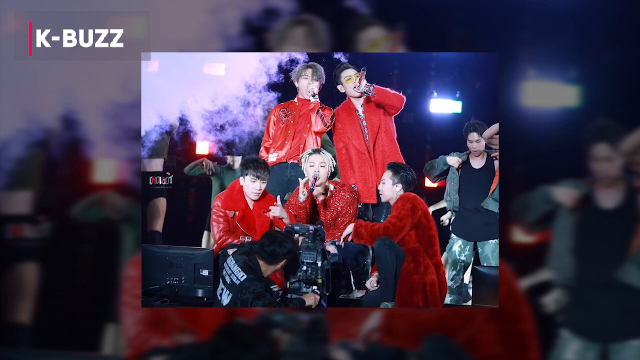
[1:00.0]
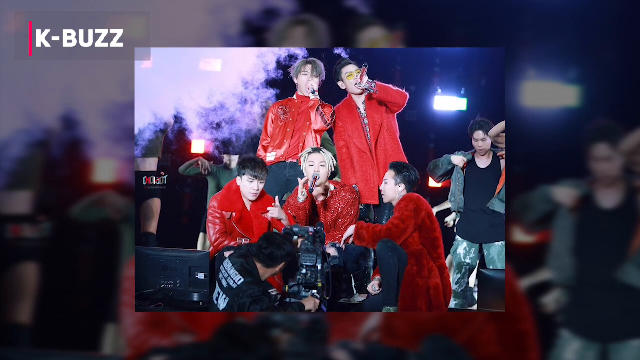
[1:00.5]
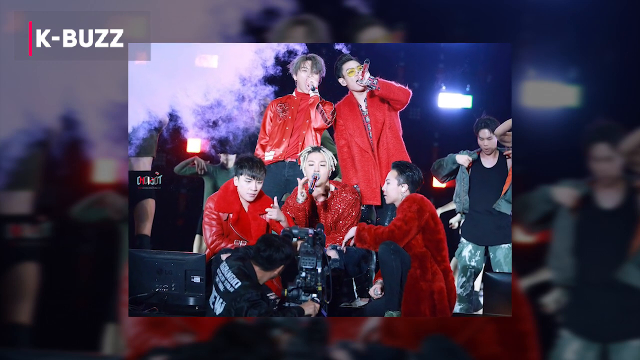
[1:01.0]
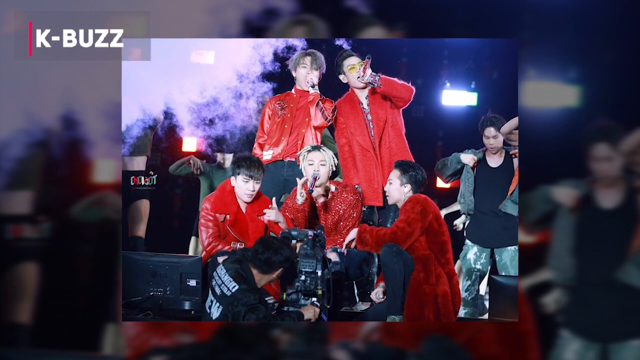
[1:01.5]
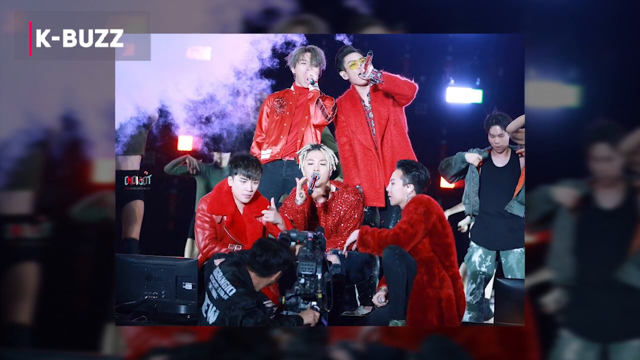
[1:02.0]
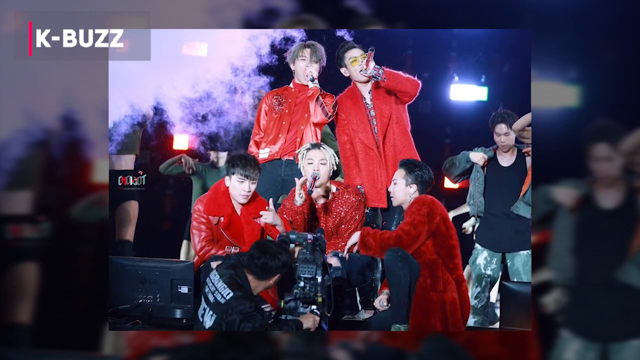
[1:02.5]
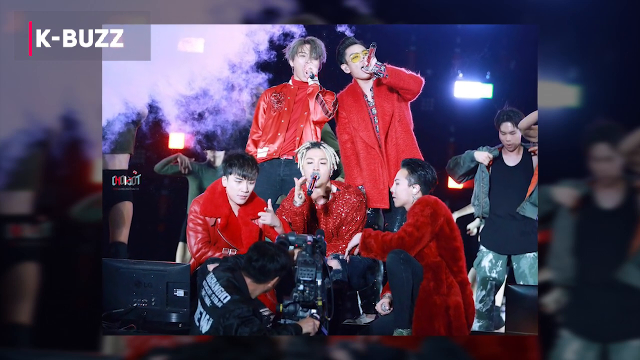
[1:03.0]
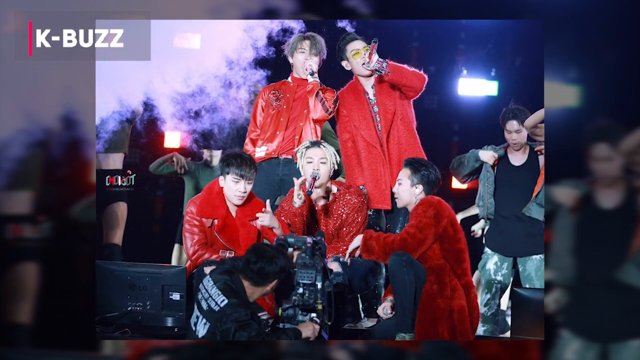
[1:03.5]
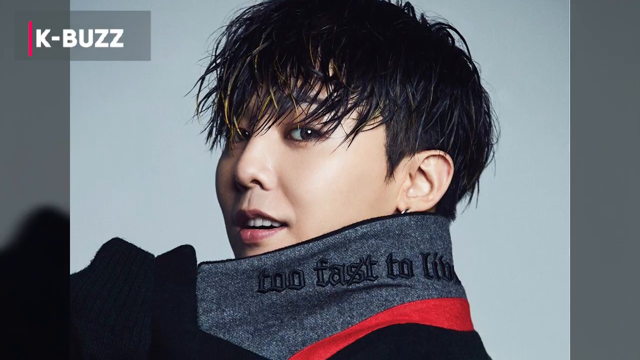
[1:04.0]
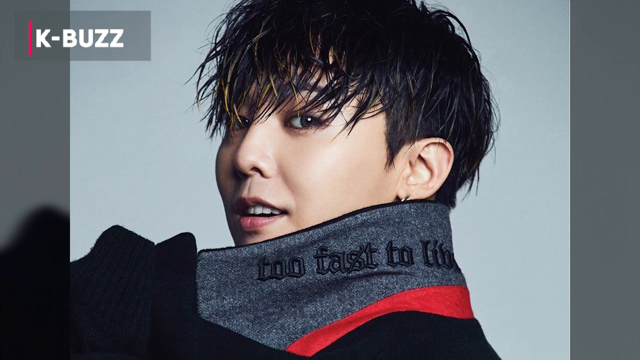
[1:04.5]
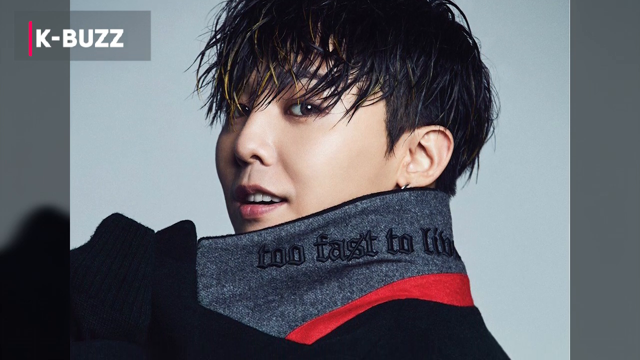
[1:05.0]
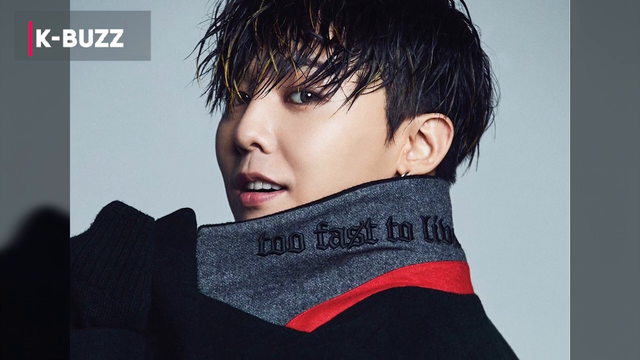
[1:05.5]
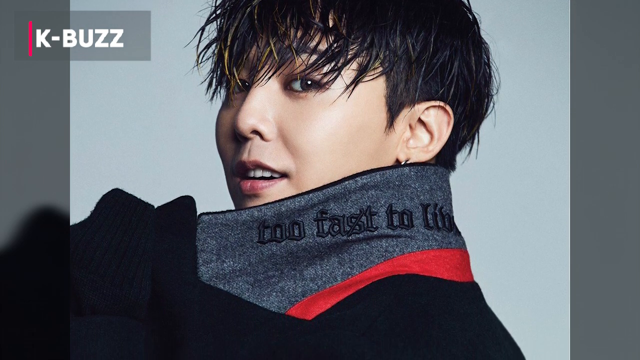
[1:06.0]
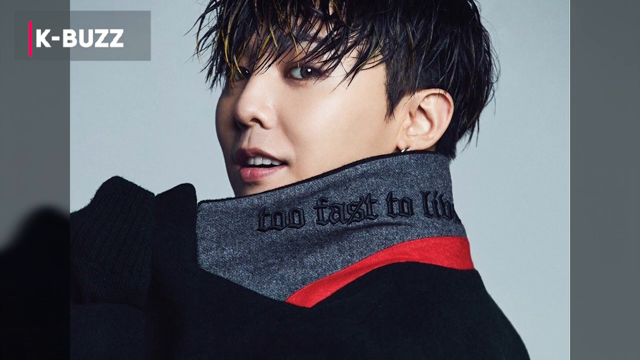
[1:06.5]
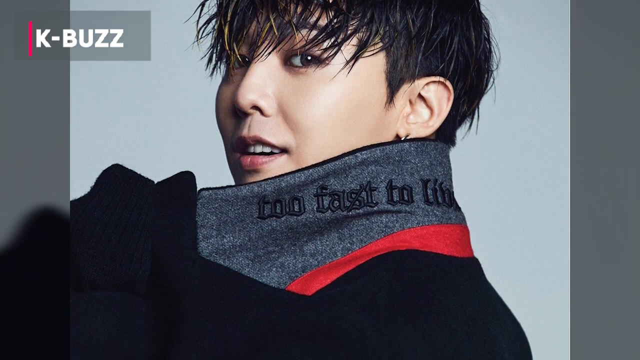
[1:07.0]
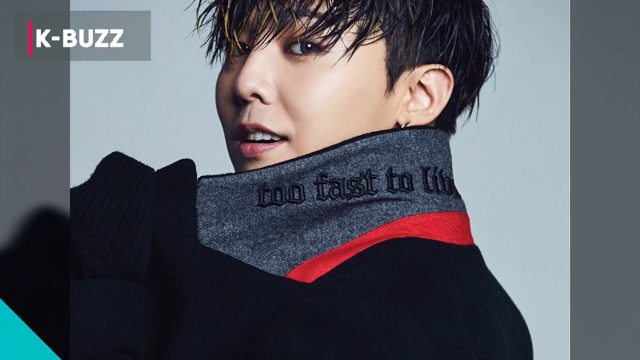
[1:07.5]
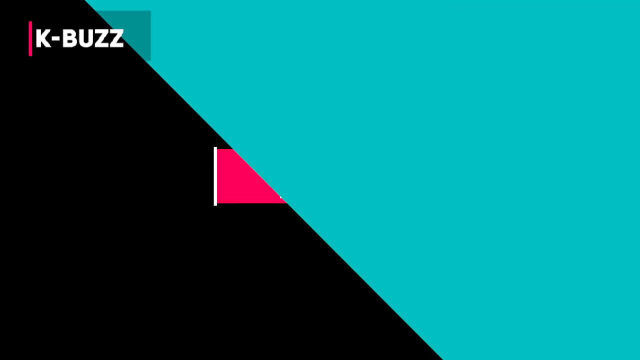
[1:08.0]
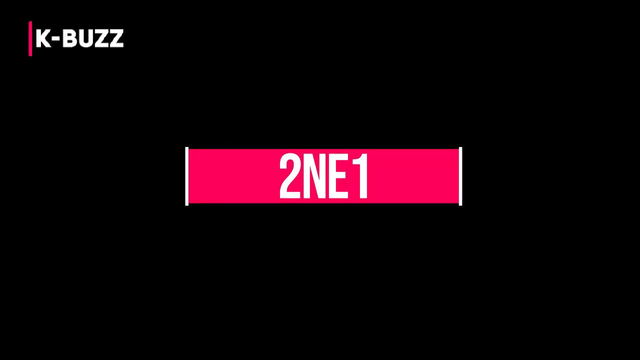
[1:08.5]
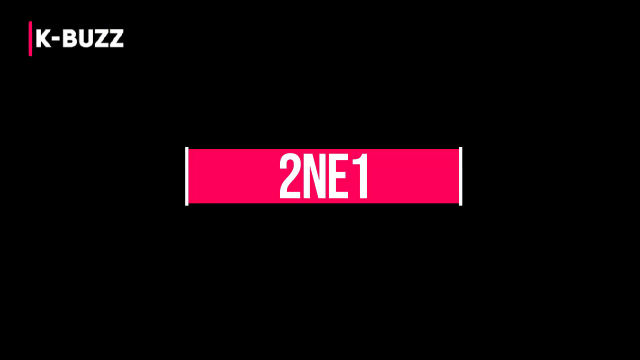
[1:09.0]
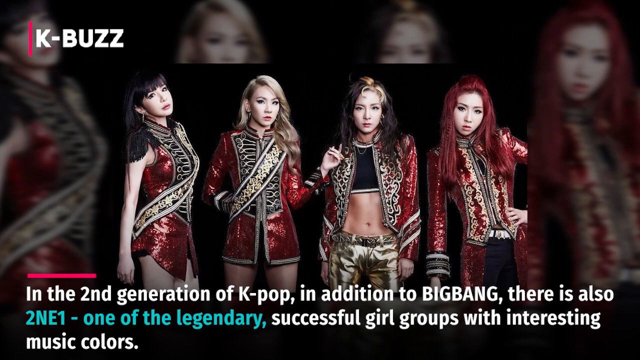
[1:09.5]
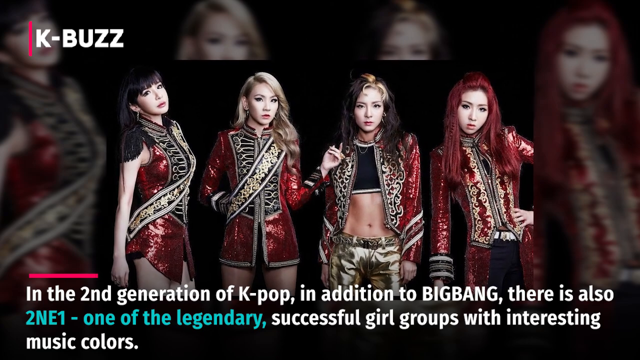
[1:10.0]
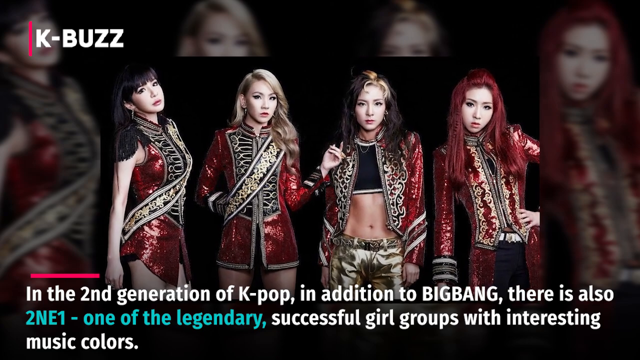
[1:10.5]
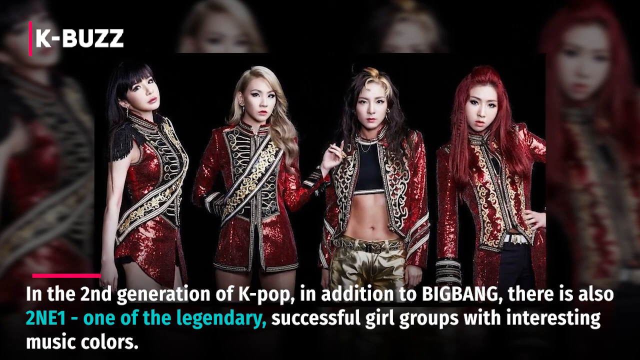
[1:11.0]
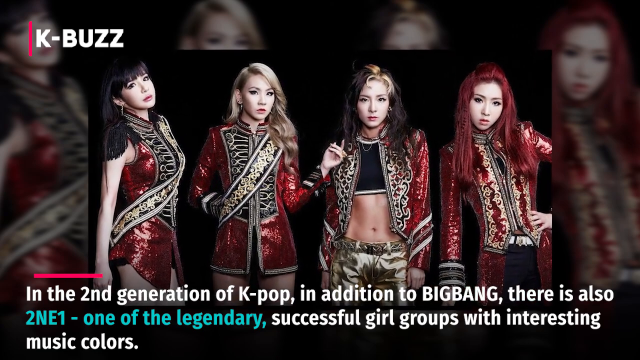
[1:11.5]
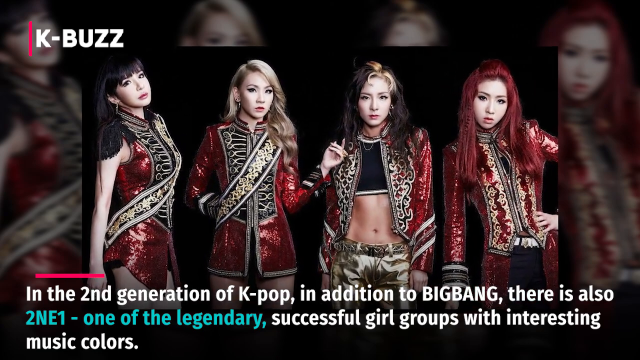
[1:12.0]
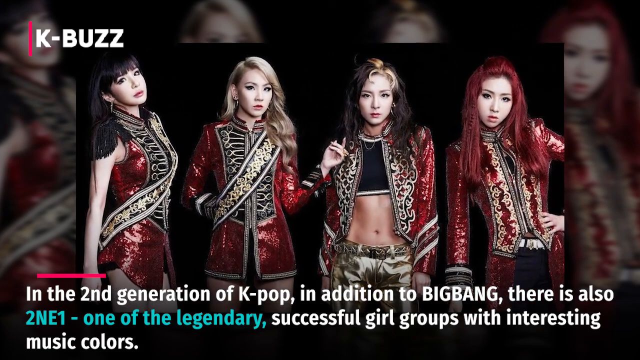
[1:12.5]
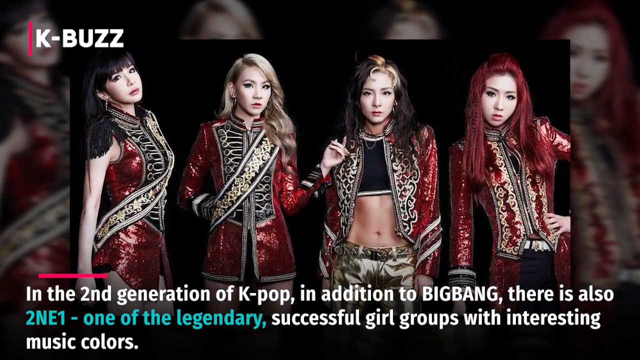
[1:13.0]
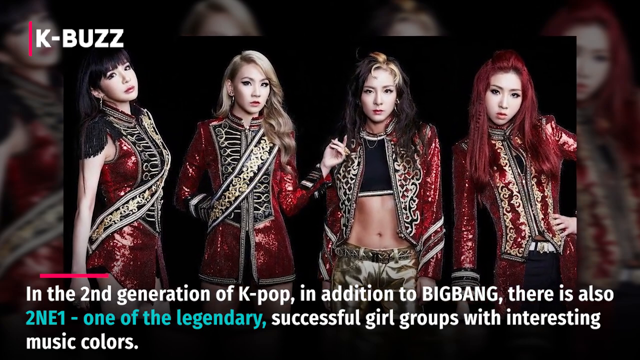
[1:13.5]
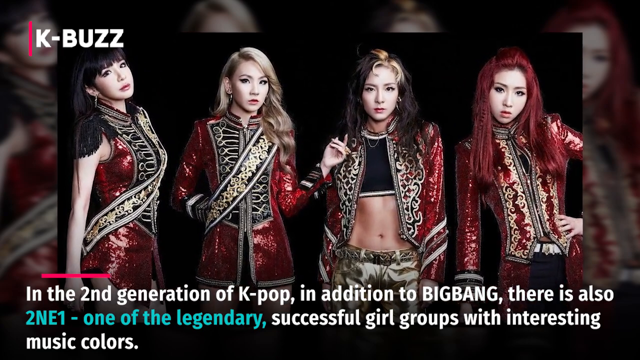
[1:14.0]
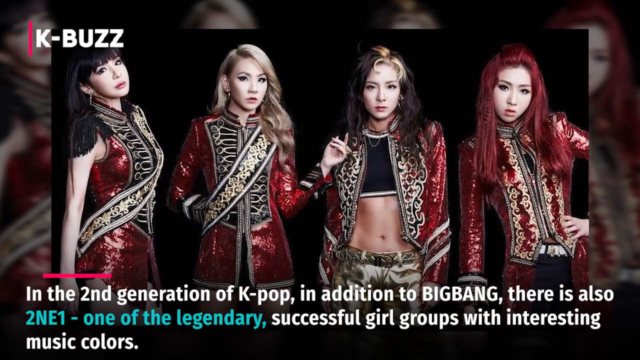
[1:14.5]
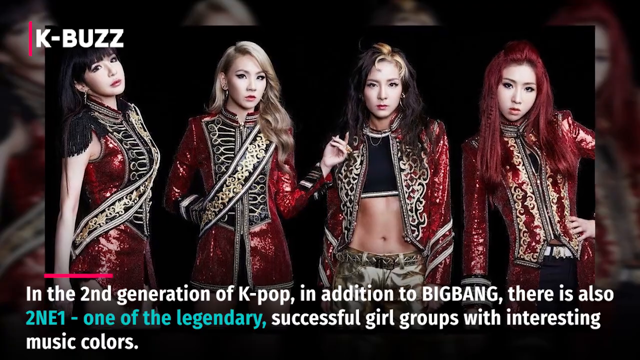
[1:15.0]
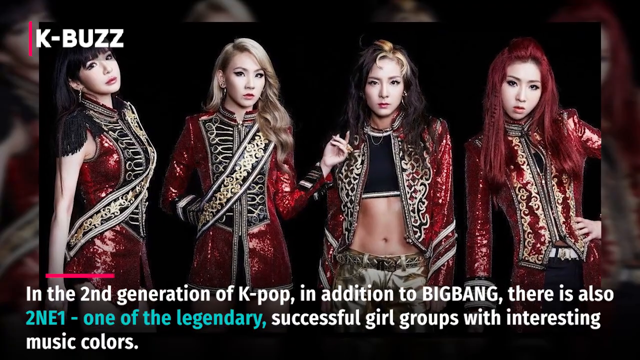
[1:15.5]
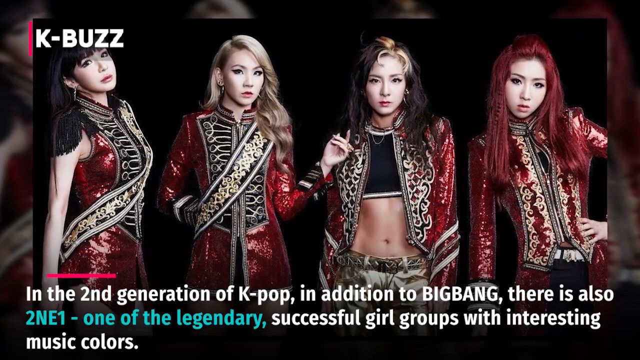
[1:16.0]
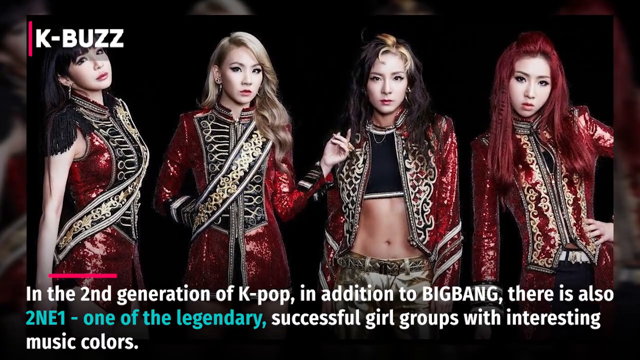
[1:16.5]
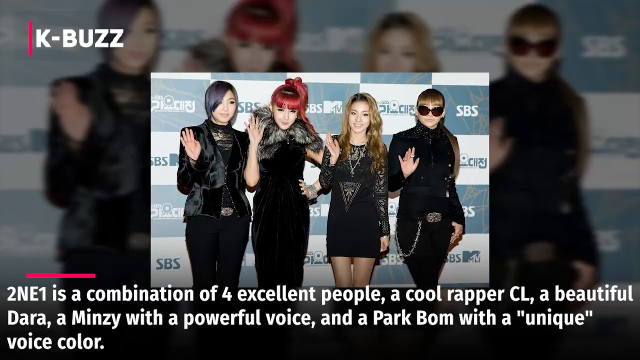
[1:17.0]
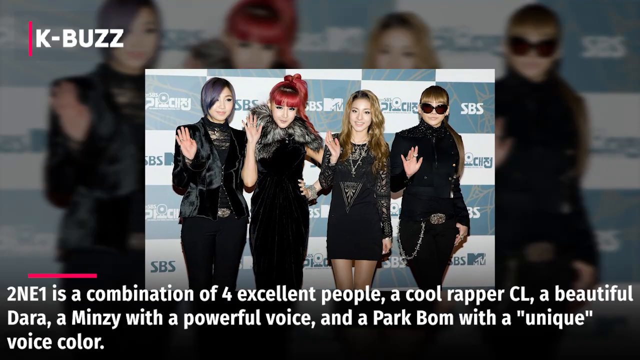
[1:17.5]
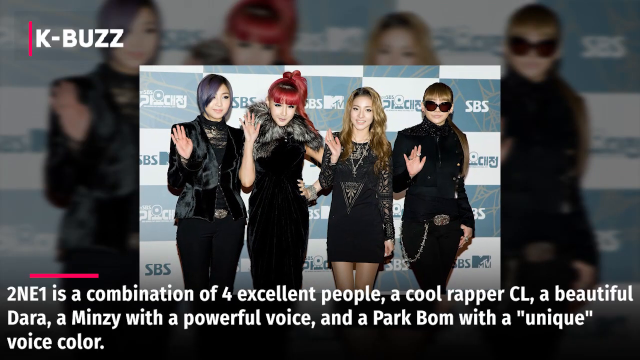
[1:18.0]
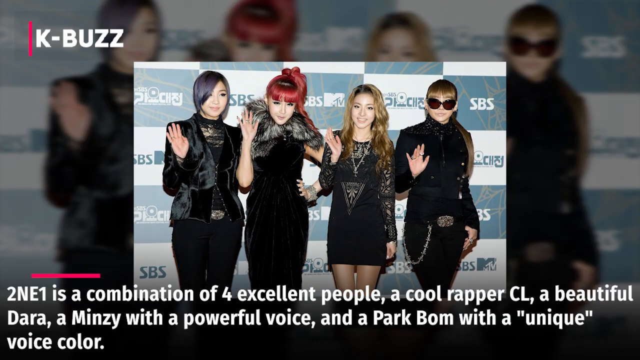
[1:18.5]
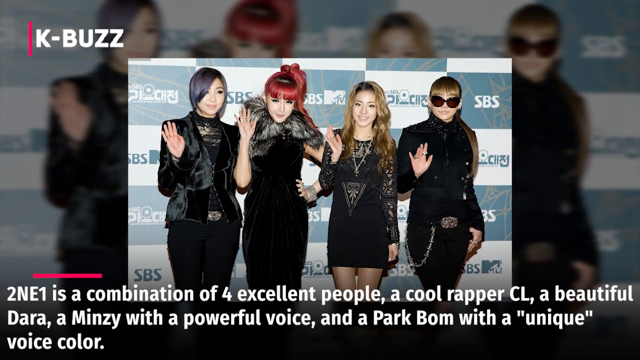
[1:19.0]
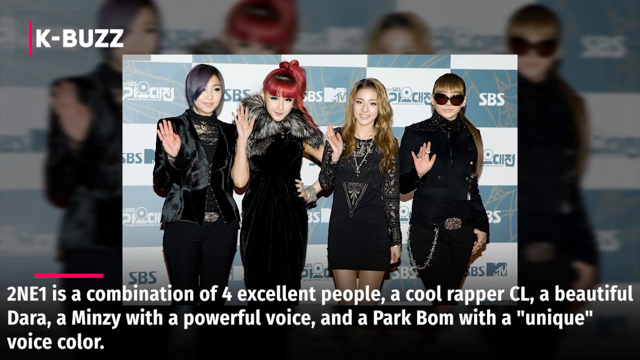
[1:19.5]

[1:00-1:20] The photo of Big Bang on stage during a live performance, in red tops and black pants, continues. Next is a photo of one bandmate whose hair looks wet; he is standing sideways but turns his head towards the camera, and his collar is up, showing words embroidered on its underside, one of which cannot be made out. Another green transition runs from bottom left to top right, and, like the Big Bang introduction, 2NE1 is introduced. A picture shows the girl group 2NE1, four young women in what look like red military-esque performance outfits. At the bottom, white text reads "in the second generation of kpop in addition to big bang there is also", then in green "2NE1 one of the legendary", then back in white "successful girl groups with interesting music colors". Another photo of 2NE1 follows, a paparazzi photo at a live event, with white text at the bottom: "2NE1 is a combination of four excellent people. A cool rapper, CL, a beautiful Dara, a Minzy with a powerful voice, and a Park Bom with a unique voice color."